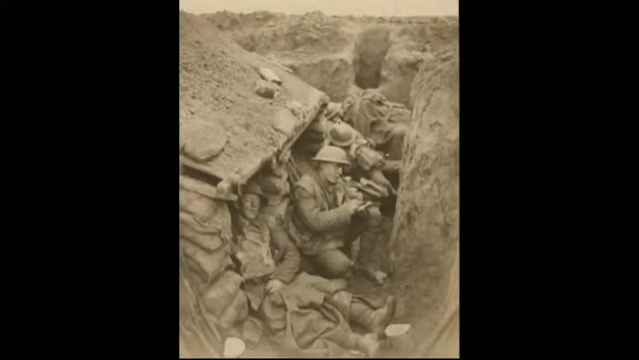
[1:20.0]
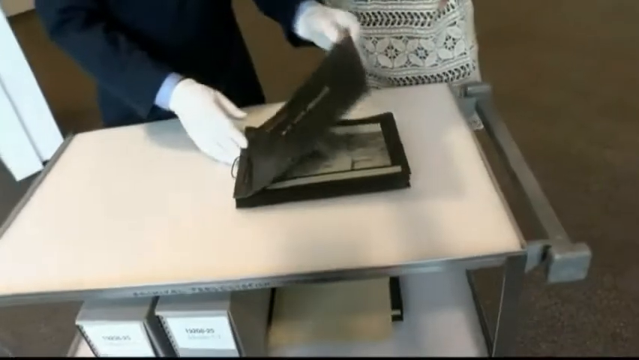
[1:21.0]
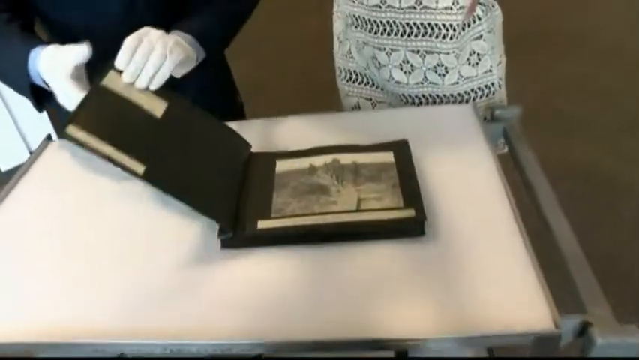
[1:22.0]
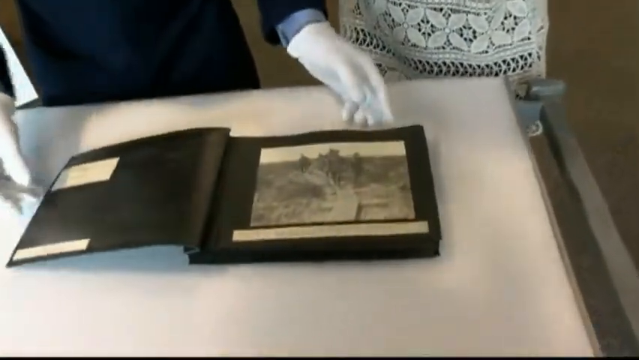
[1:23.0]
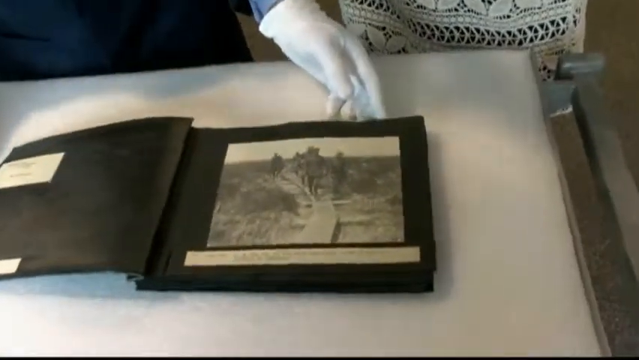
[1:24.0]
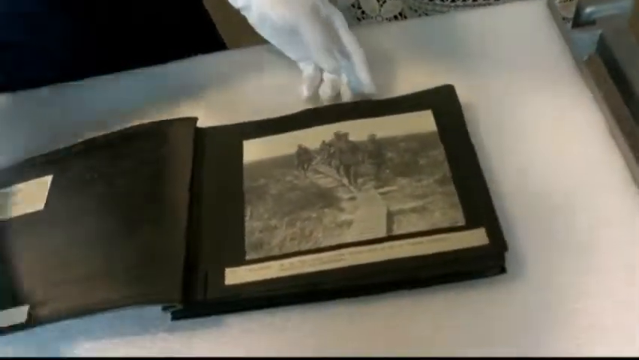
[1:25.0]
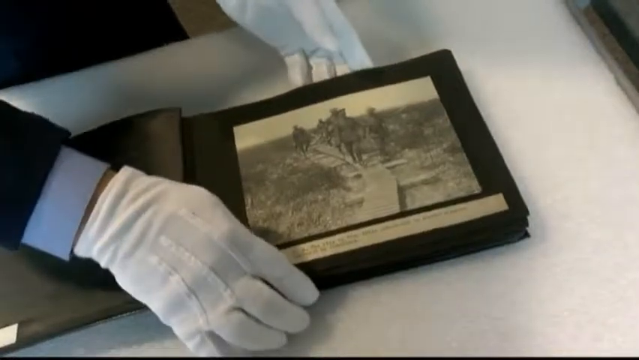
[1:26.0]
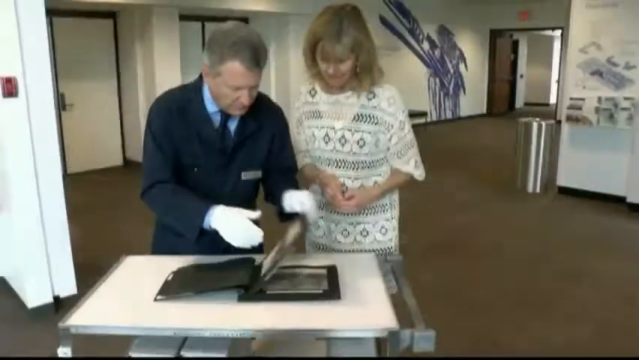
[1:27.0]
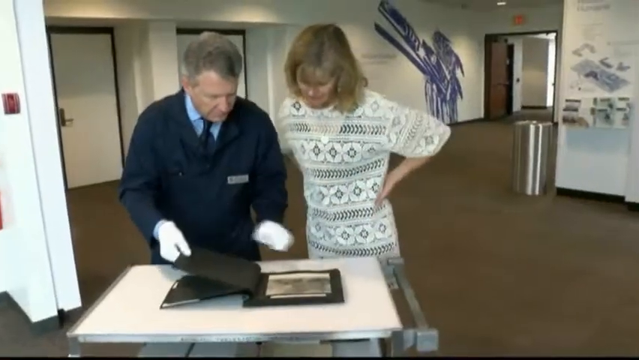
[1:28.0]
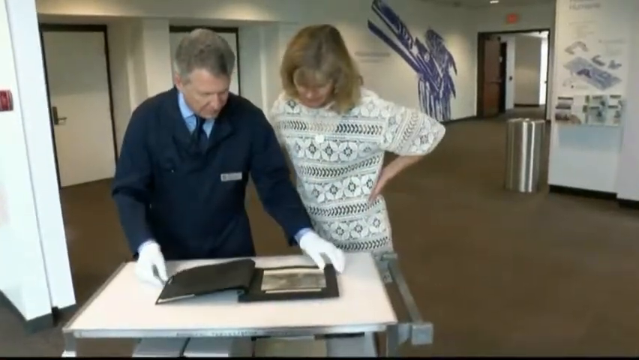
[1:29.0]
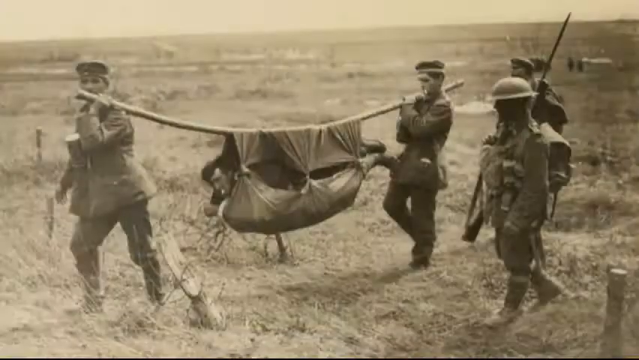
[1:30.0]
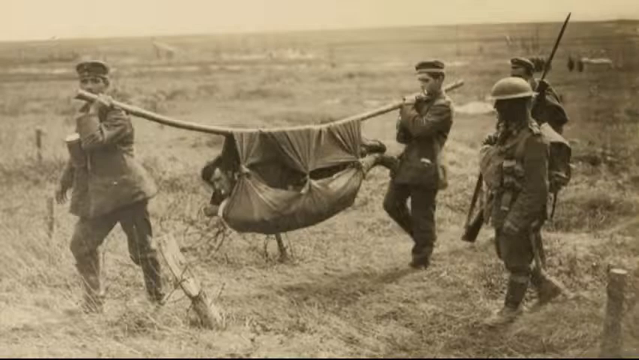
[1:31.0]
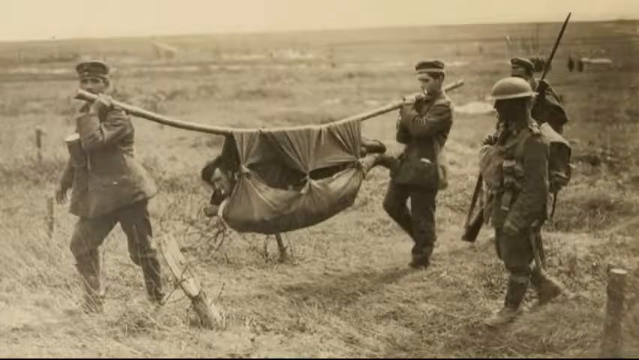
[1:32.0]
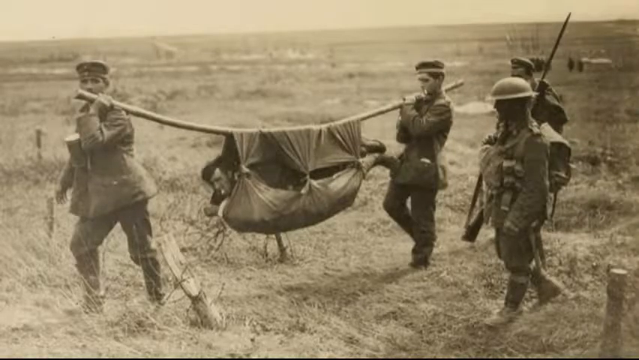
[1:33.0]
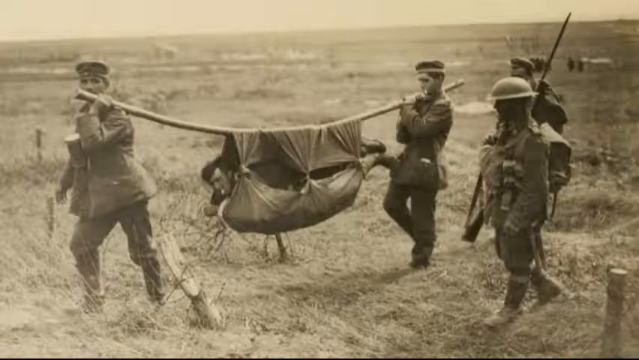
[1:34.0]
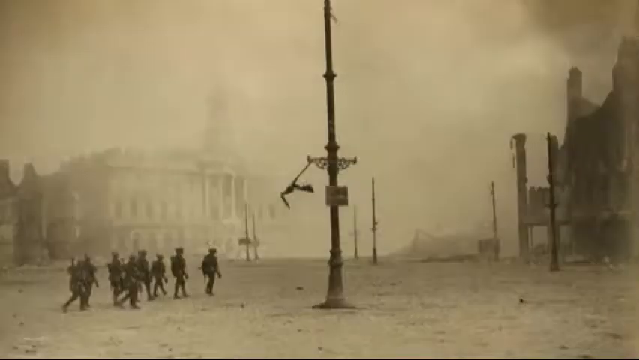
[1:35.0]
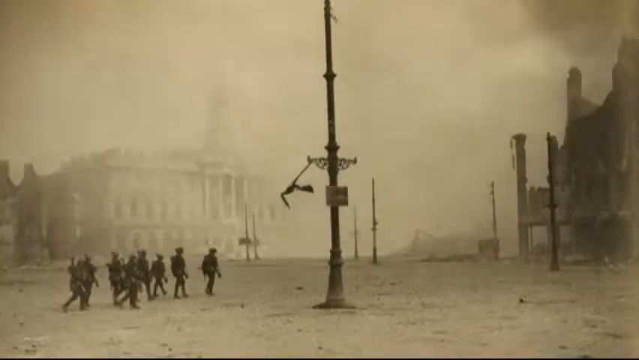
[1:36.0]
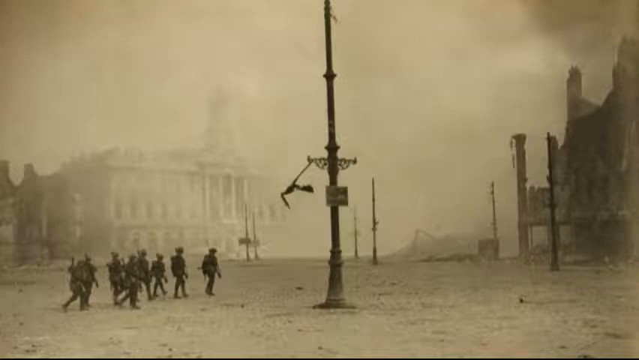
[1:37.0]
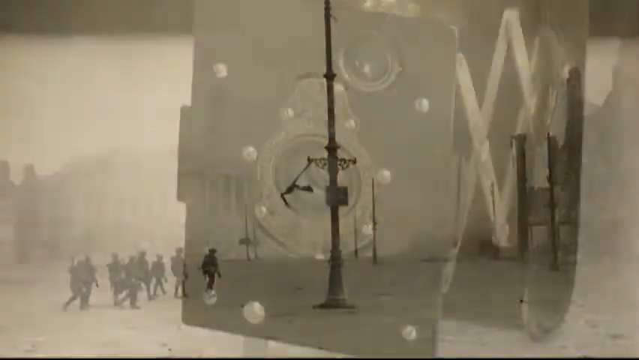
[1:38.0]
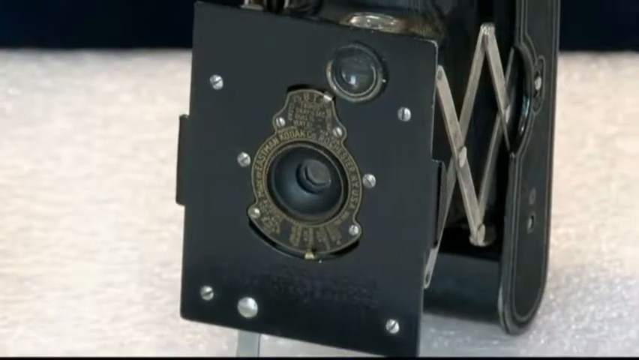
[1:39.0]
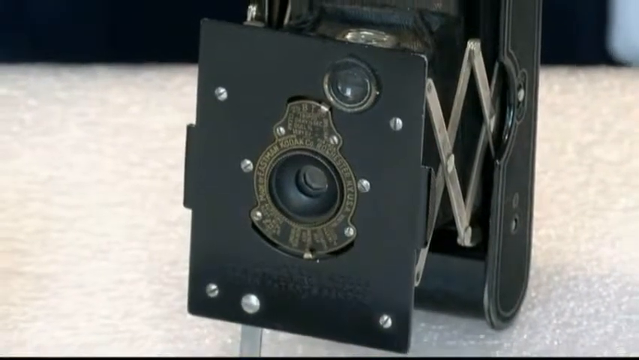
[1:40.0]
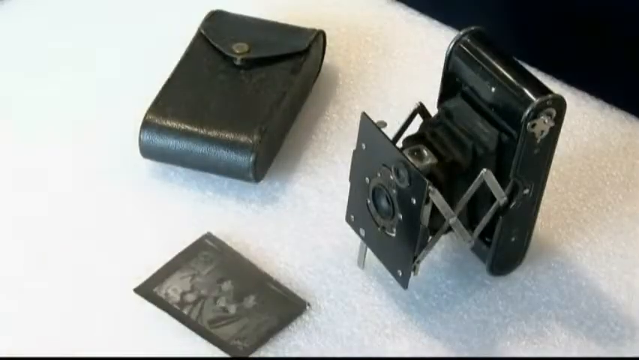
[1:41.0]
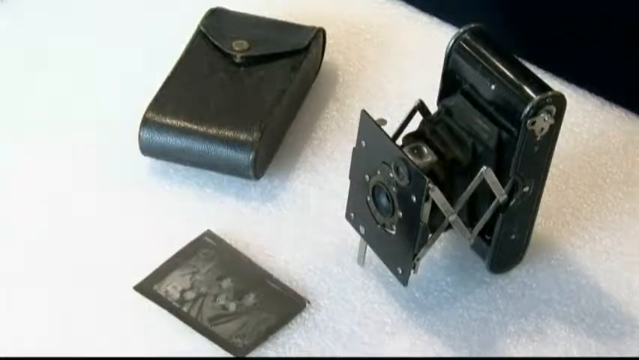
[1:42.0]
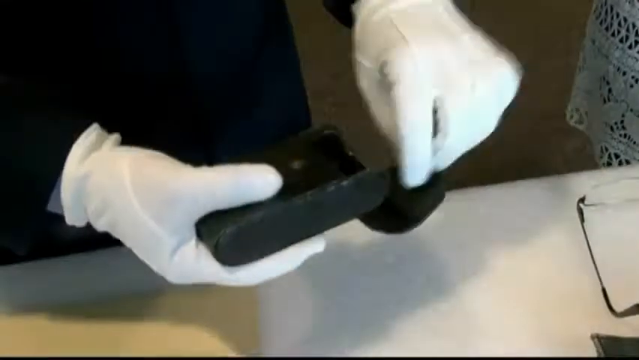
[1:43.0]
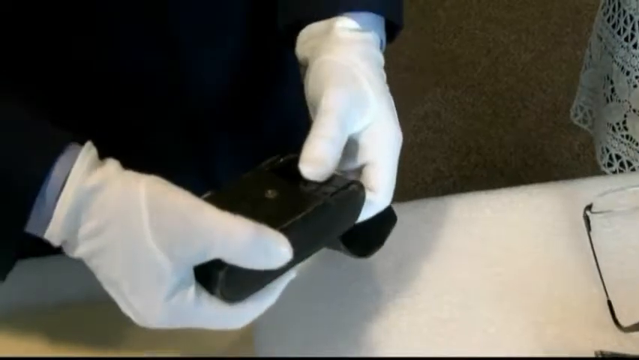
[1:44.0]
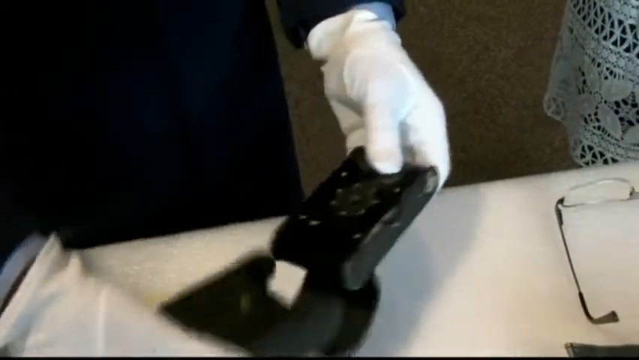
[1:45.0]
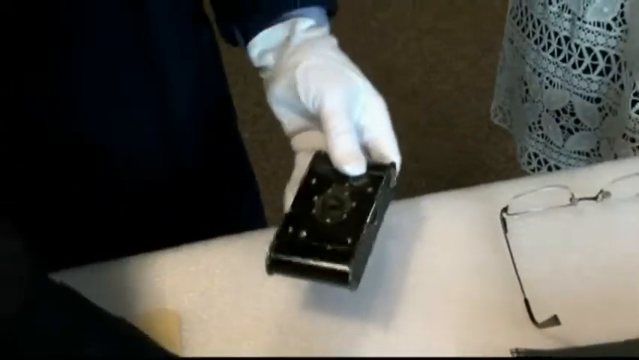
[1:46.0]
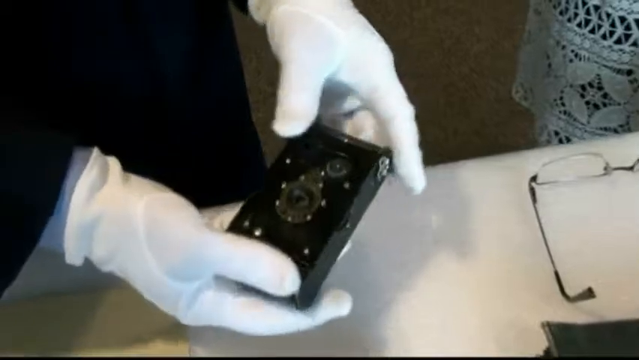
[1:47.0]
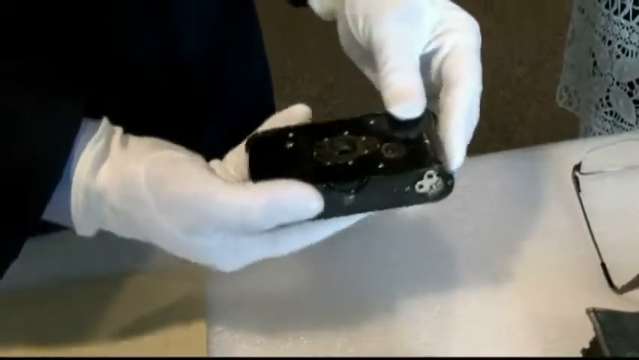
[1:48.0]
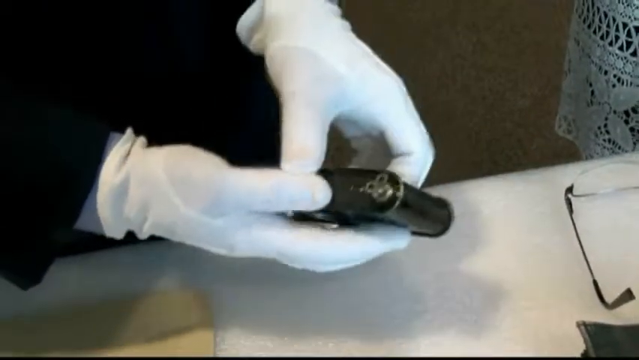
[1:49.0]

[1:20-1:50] A square black case is on a white table. A man in a black suit wearing white gloves opens the case, and the camera zooms in on its contents: a photo album showing a black-and-white photo of people in military uniforms walking on a small wooden path. The camera zooms out to show a gray-haired man in a black suit with a blue shirt and a black tie, and standing to his left a woman with long blonde hair in a white shirt with black and gray designs. They look down at the photo album on the white table. The room in the background is white, with three doors leading to separate rooms. The video cuts to a black-and-white picture of two men carrying a stick on their shoulders with a blanket attached to it and a person lying inside the blanket, all dressed in military uniforms. It then cuts to a white tabletop with pieces of old cameras lying on it.